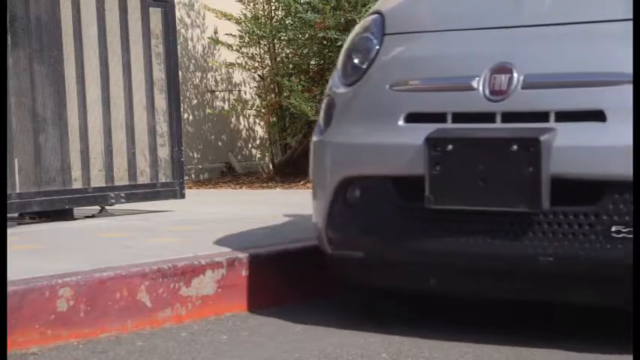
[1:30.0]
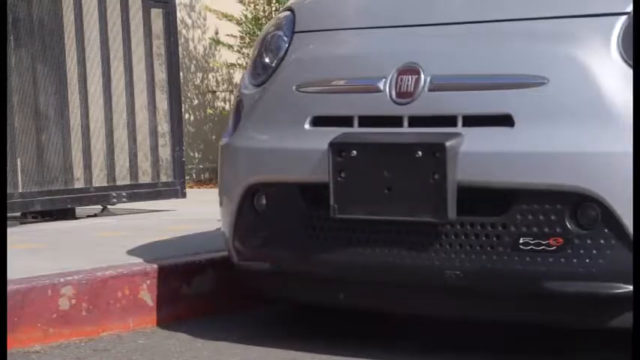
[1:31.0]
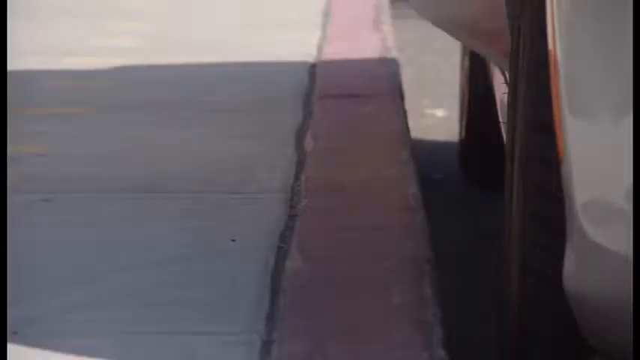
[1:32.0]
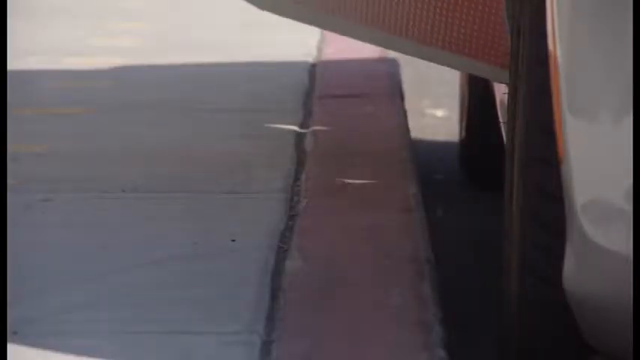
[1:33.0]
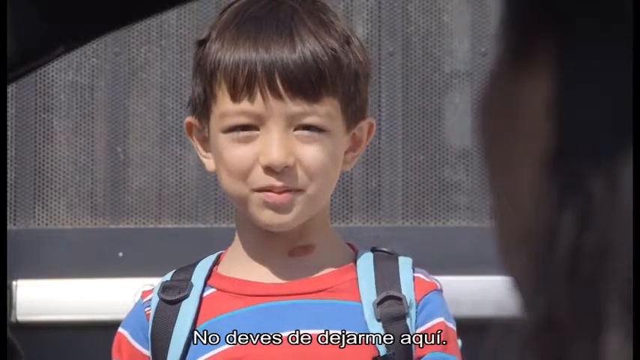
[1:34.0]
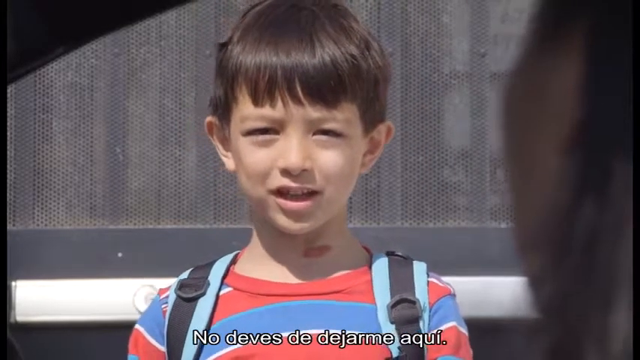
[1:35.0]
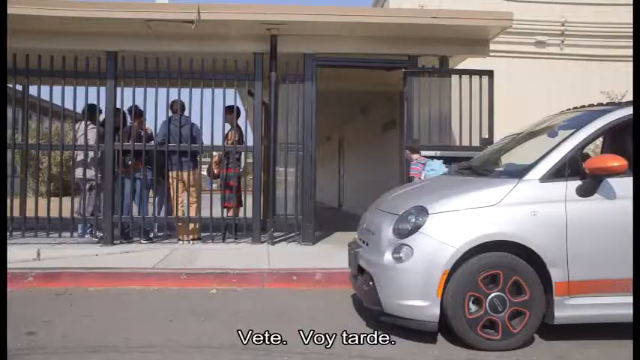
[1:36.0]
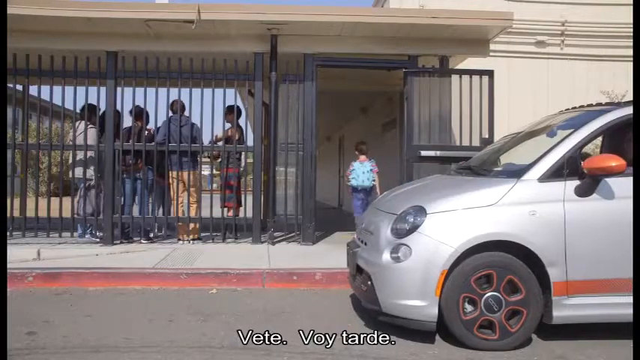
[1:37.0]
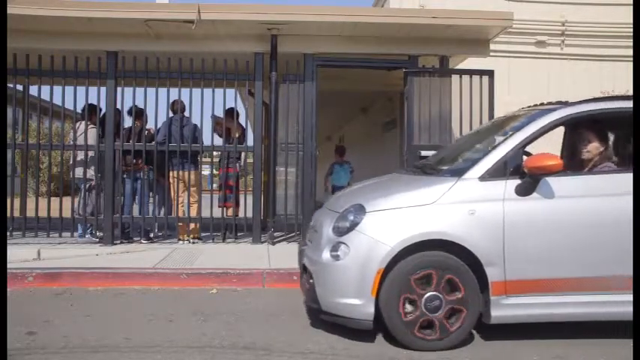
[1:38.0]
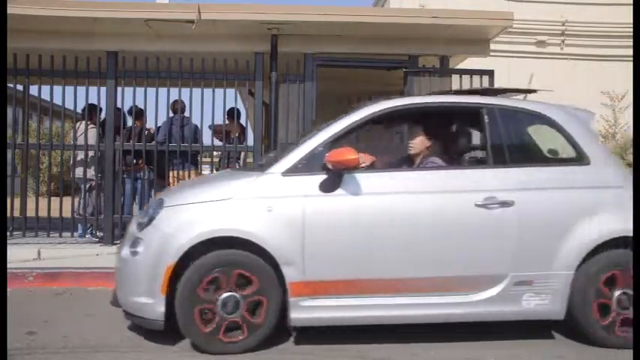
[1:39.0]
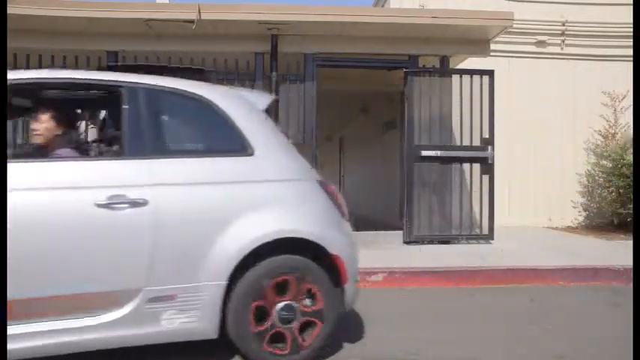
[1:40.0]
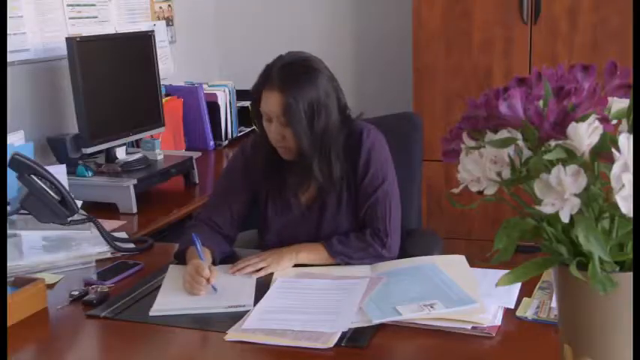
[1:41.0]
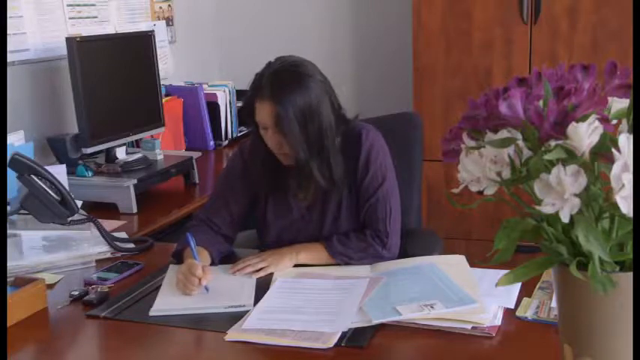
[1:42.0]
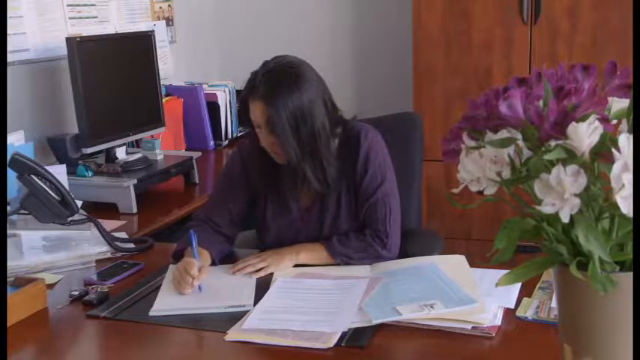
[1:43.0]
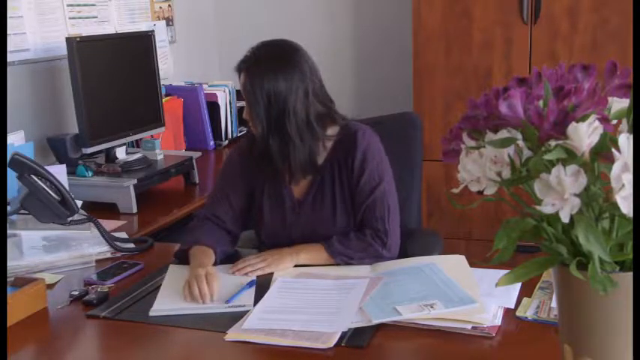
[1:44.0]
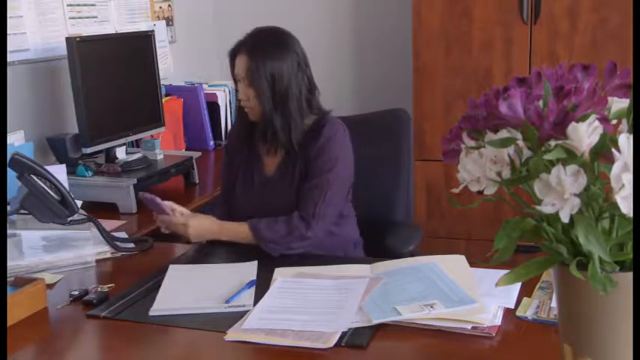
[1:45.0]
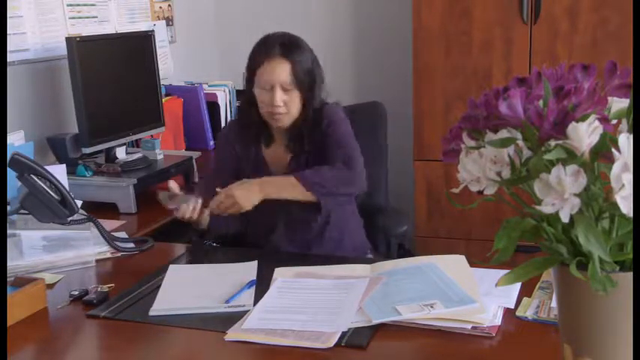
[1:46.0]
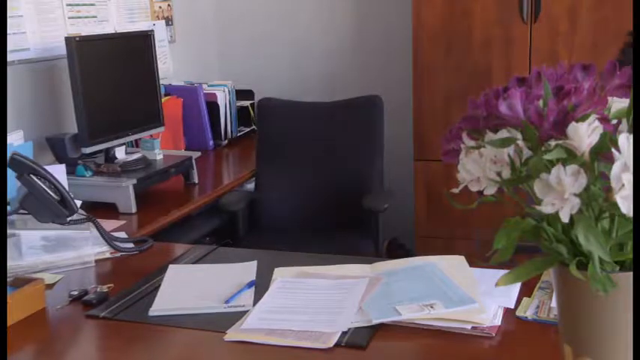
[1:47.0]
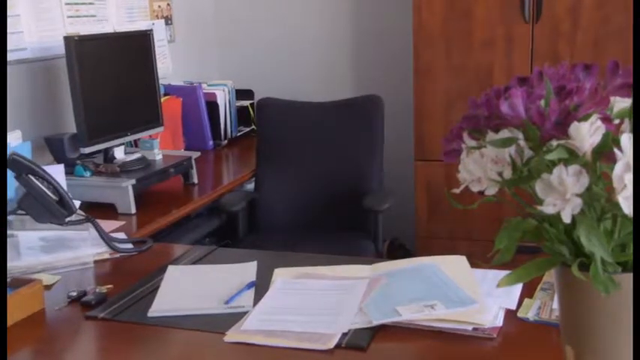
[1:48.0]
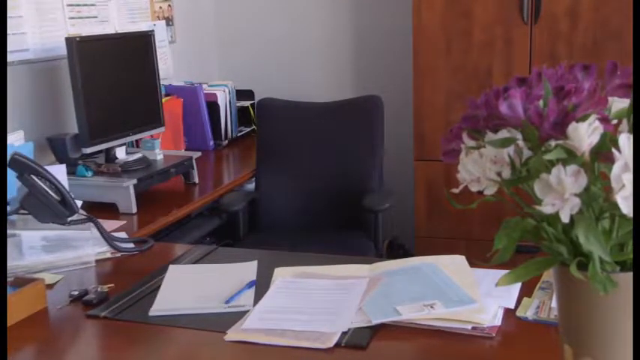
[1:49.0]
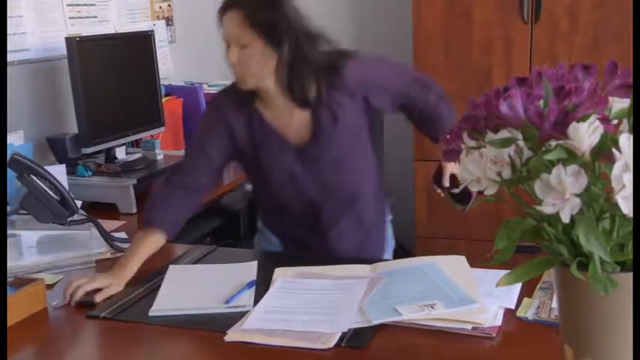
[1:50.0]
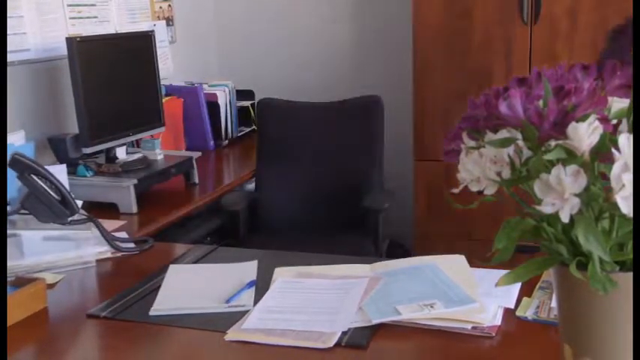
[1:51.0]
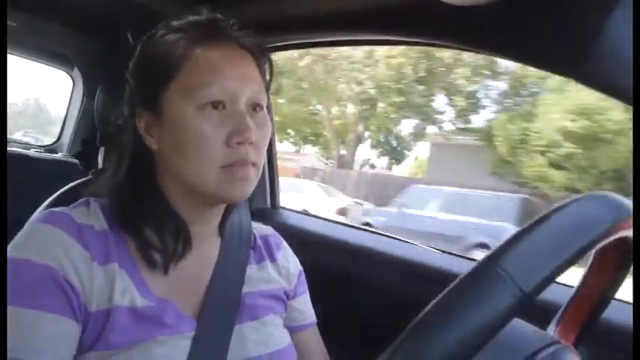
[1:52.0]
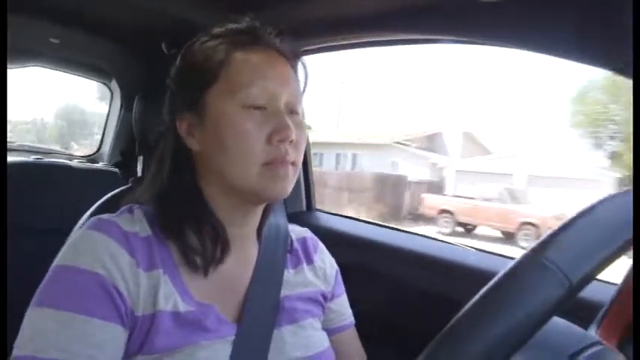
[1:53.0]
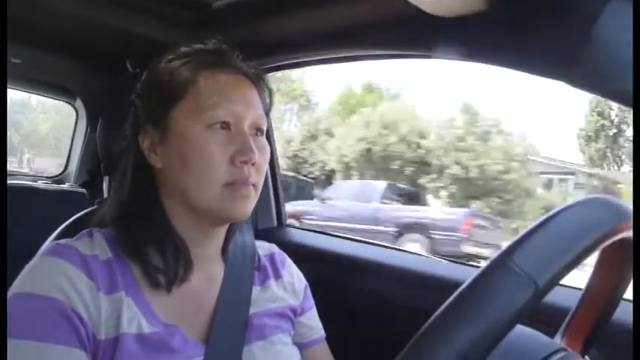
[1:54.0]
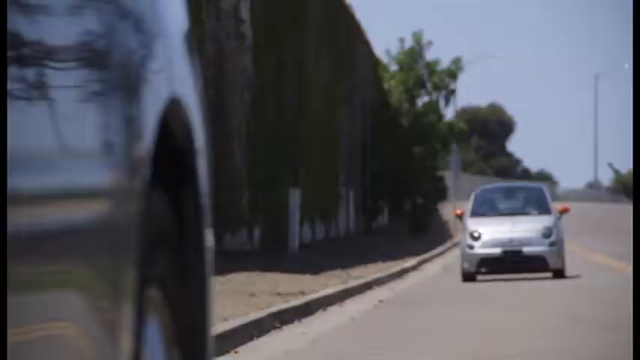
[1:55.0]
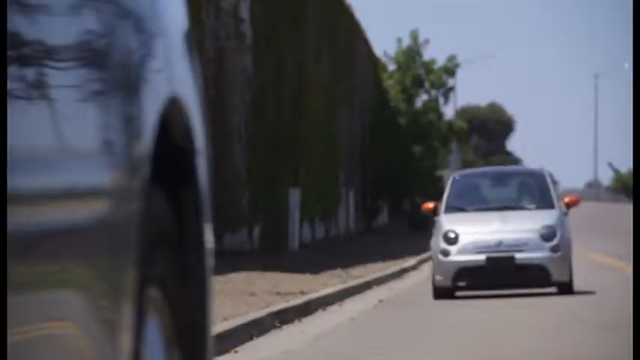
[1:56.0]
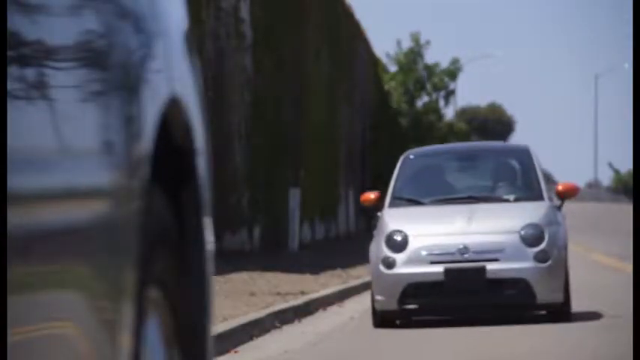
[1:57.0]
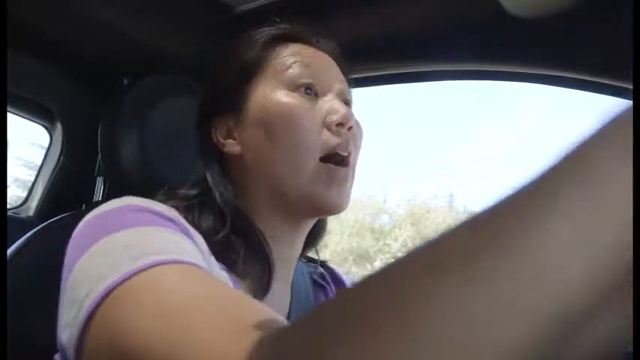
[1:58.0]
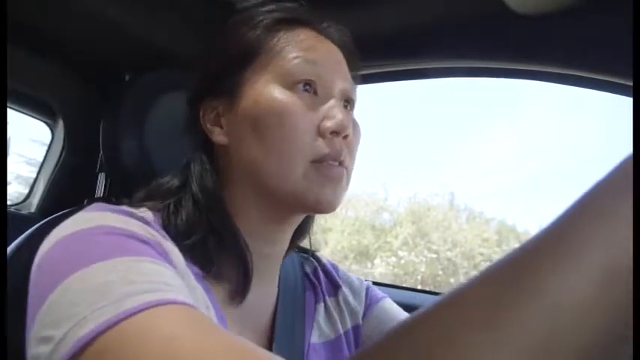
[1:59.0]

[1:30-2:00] The car stops by the school, where the lady drops off her son. He gets out of the car, stands on the sidewalk and says his goodbyes to his mother. The son goes through the school gates, and the mother drives off in the car. The video transitions to a lady at work wearing a purple shirt; she seems to be rushing through the work. She checks her phone and notices she is late, gets up in a hurry, rushes out, comes back in to grab the car keys, and rushes out again. The next scene shows driving in the car, with the camera focused on her face, followed by the car approaching another car in front of it. The video then transitions to a lady holding a stop sign, a school bus, and a boy about to cross the road.